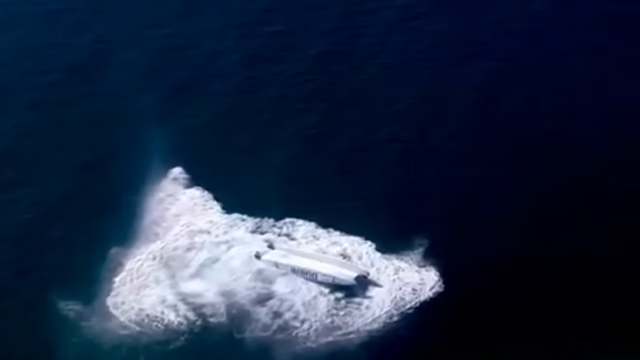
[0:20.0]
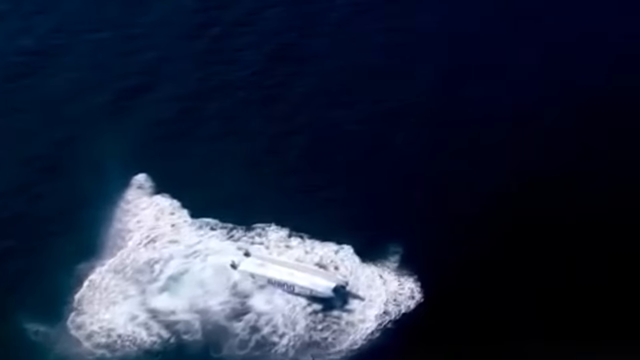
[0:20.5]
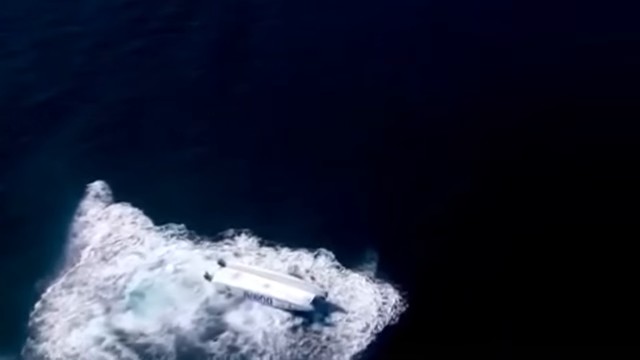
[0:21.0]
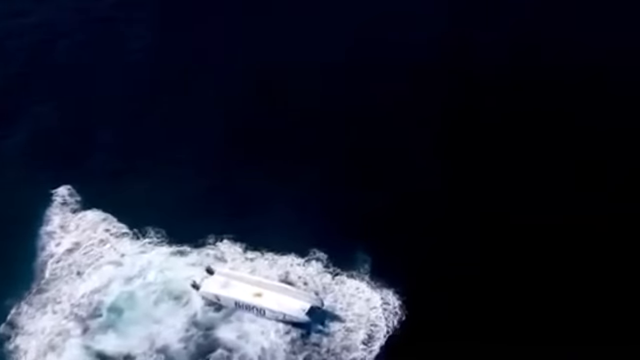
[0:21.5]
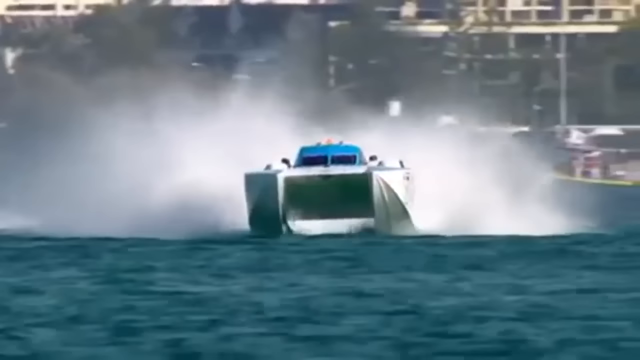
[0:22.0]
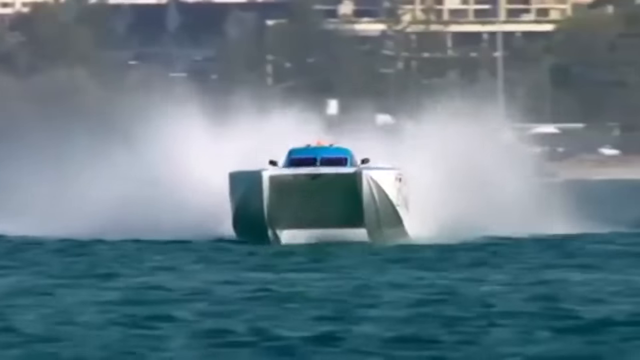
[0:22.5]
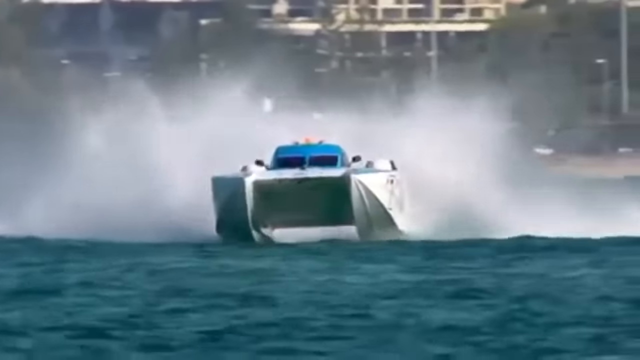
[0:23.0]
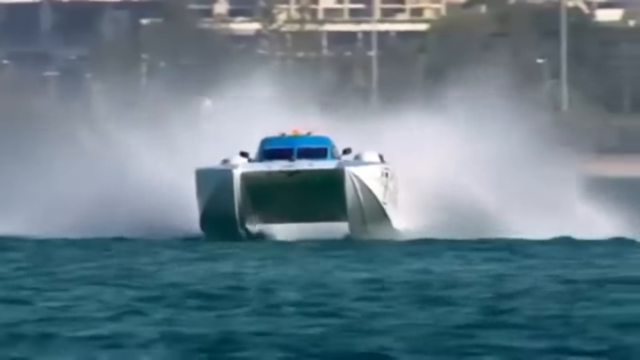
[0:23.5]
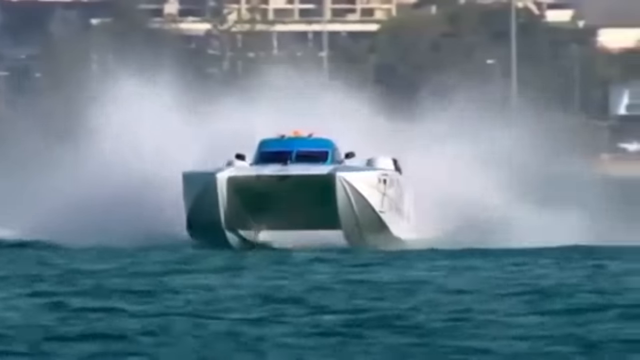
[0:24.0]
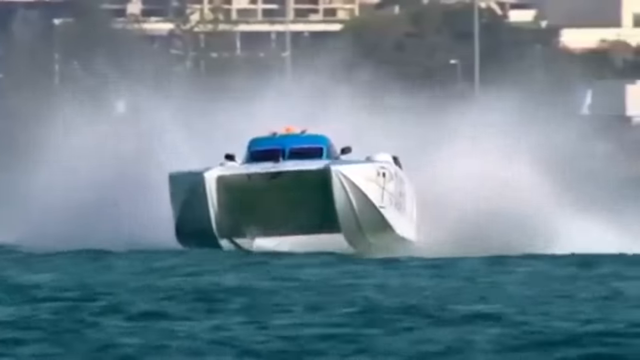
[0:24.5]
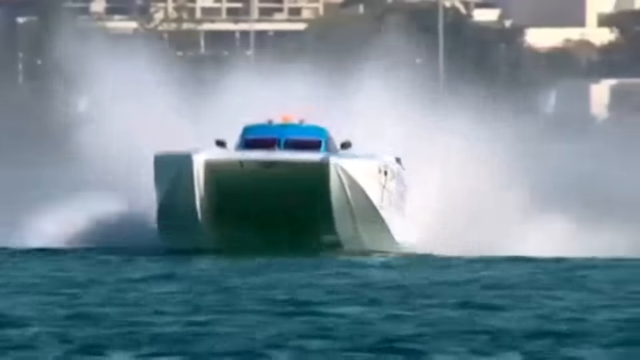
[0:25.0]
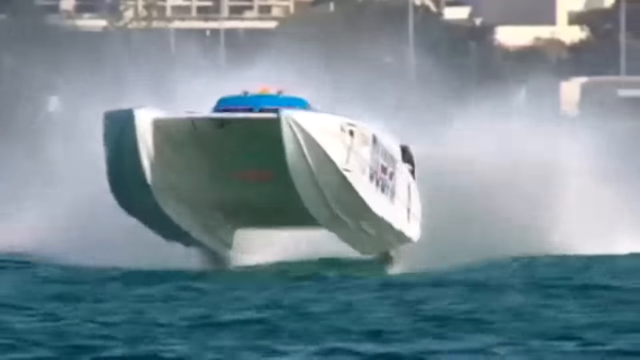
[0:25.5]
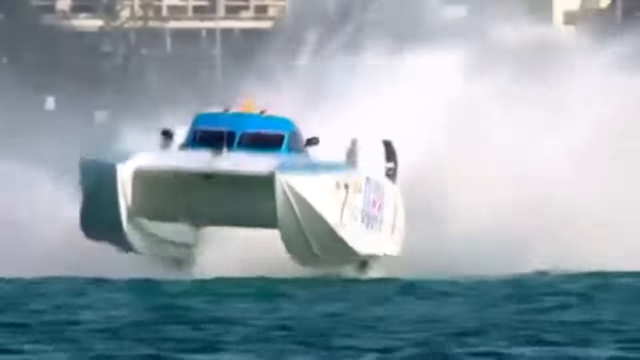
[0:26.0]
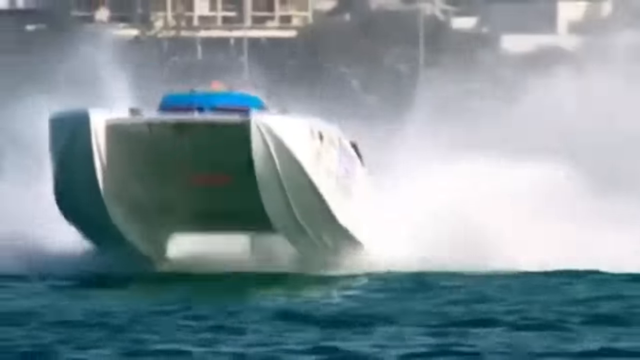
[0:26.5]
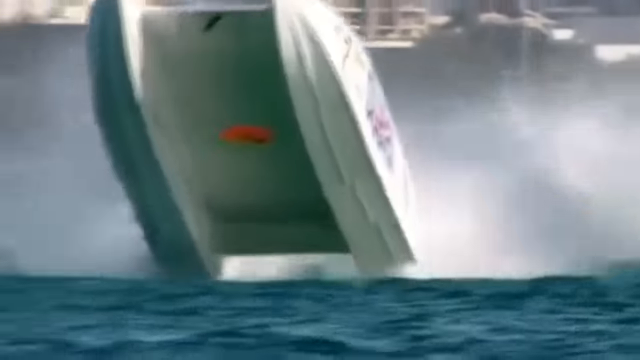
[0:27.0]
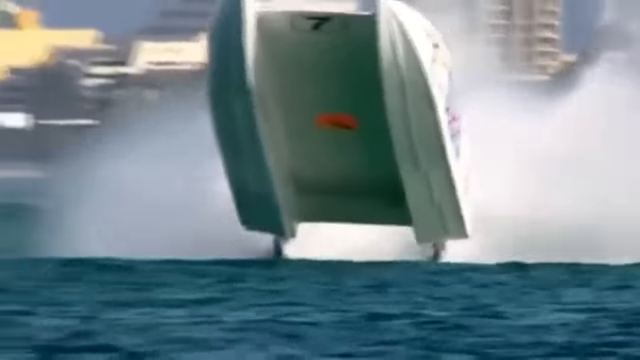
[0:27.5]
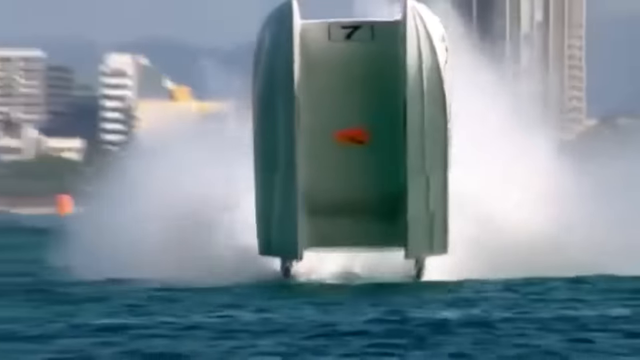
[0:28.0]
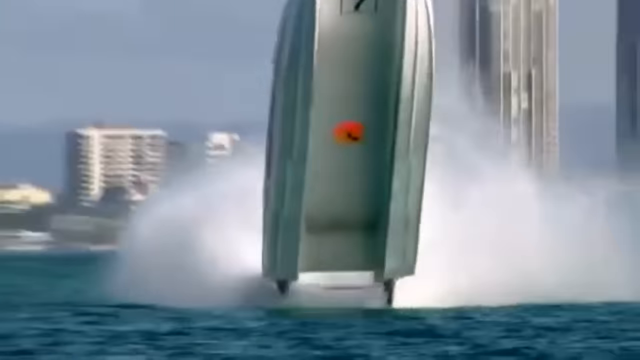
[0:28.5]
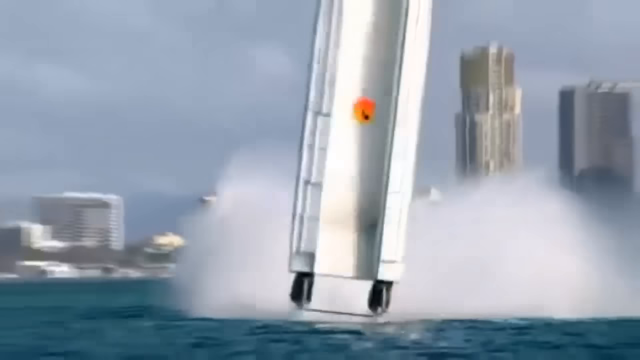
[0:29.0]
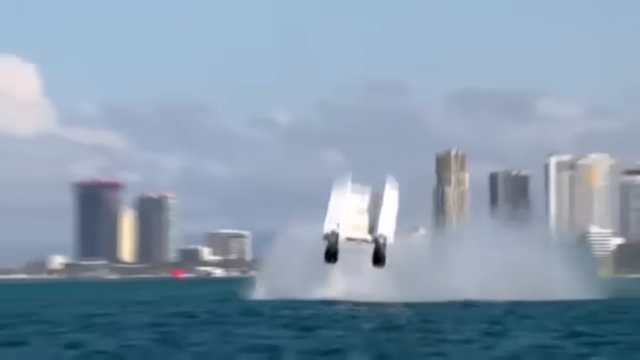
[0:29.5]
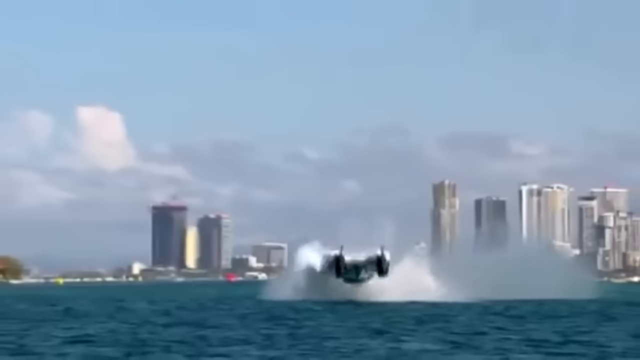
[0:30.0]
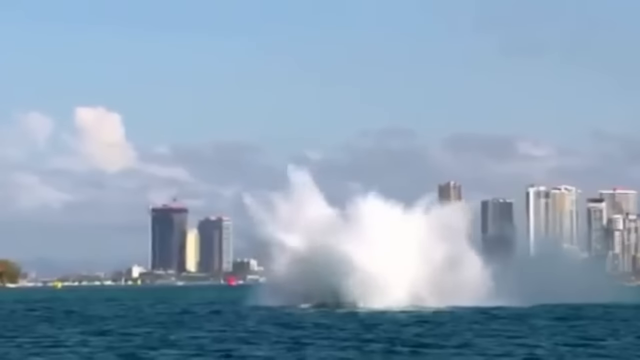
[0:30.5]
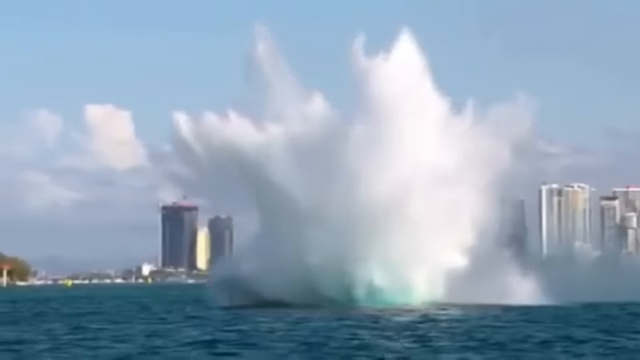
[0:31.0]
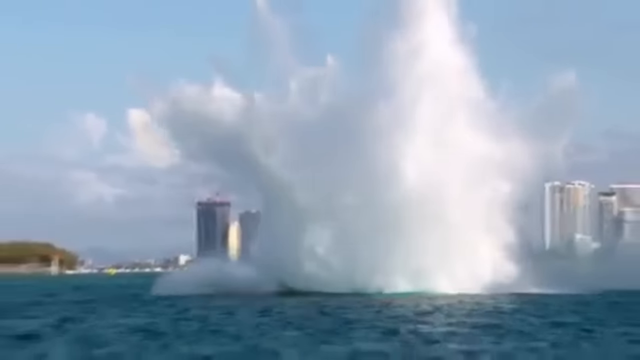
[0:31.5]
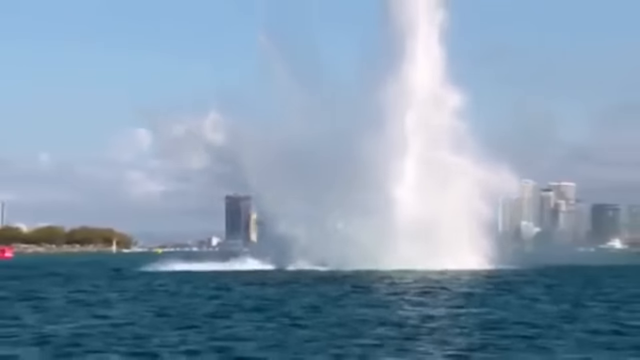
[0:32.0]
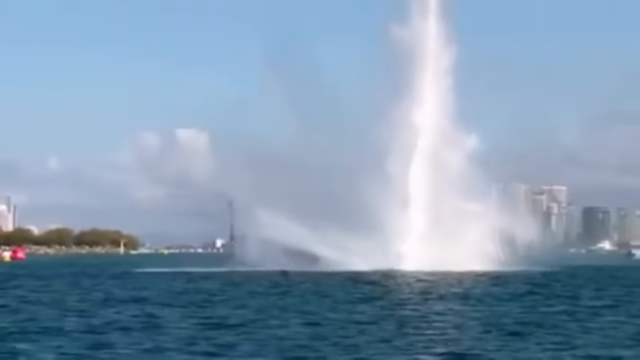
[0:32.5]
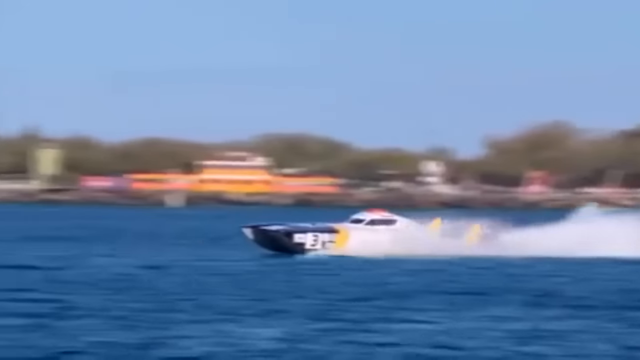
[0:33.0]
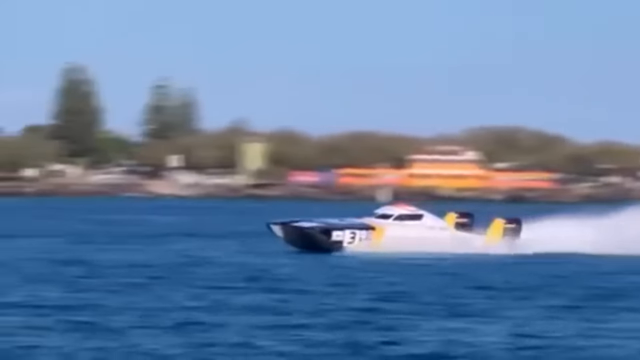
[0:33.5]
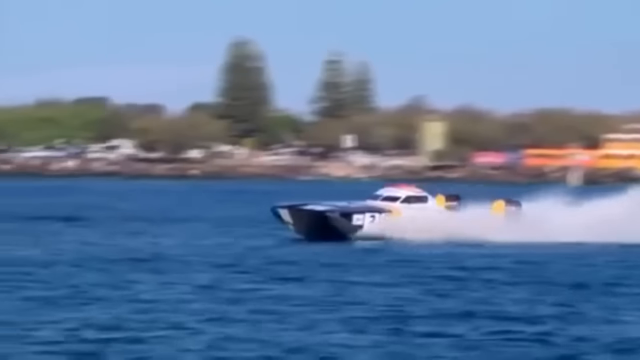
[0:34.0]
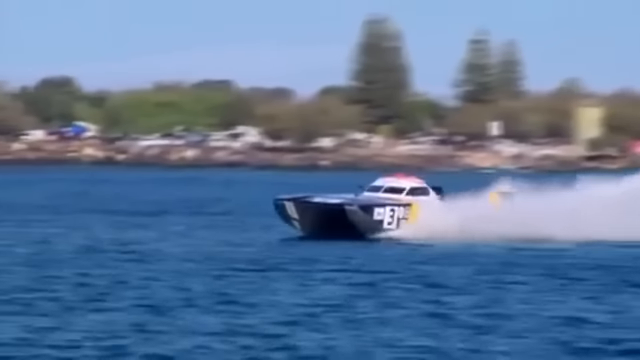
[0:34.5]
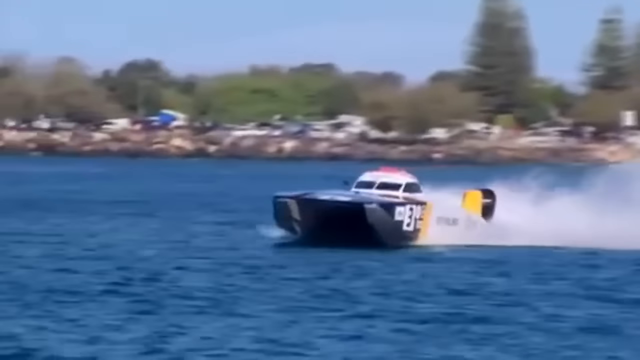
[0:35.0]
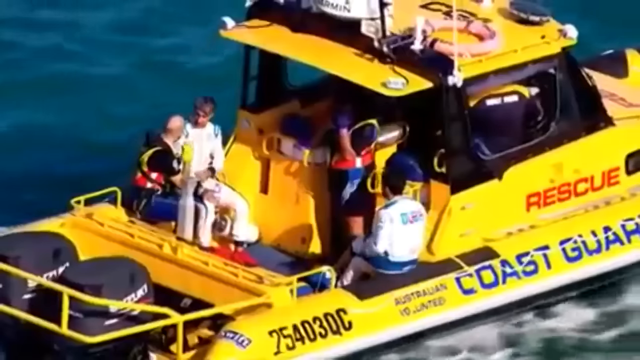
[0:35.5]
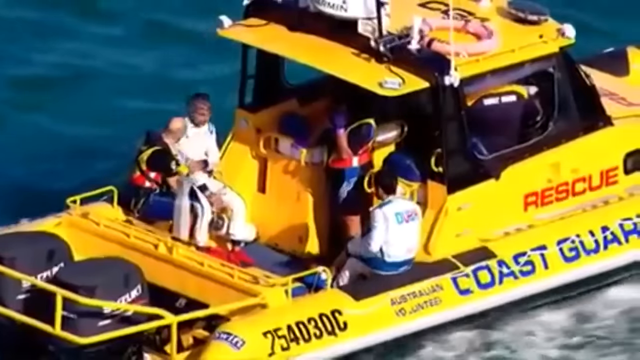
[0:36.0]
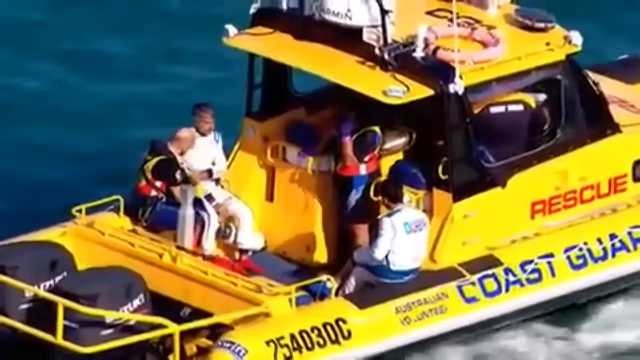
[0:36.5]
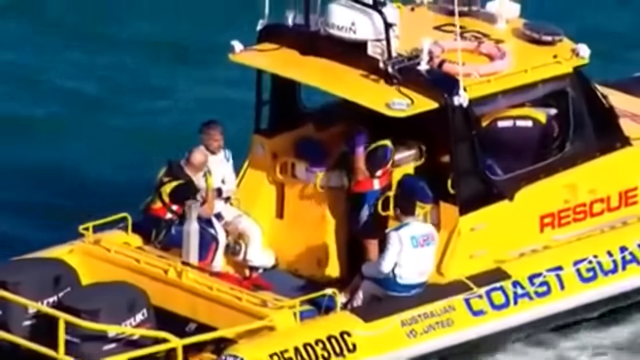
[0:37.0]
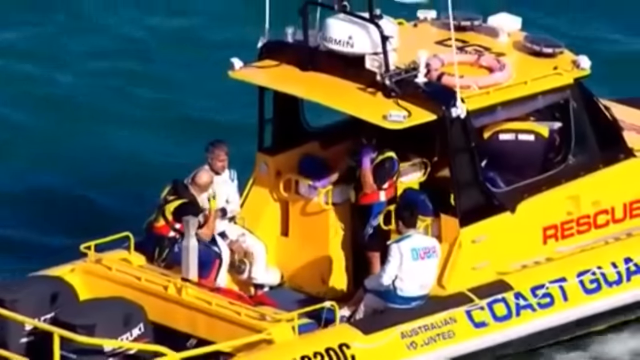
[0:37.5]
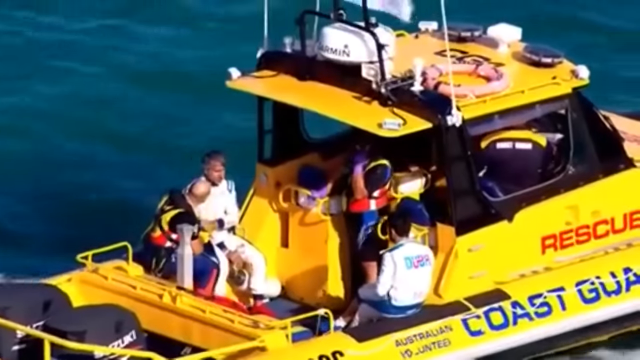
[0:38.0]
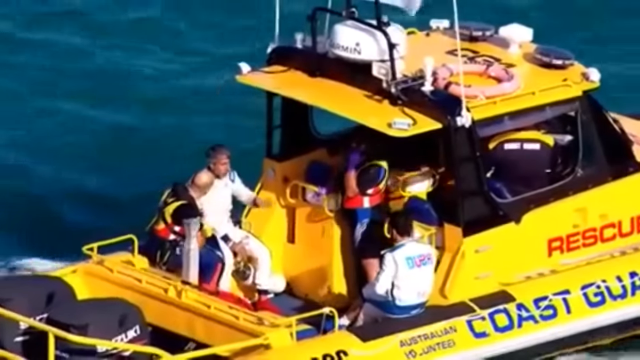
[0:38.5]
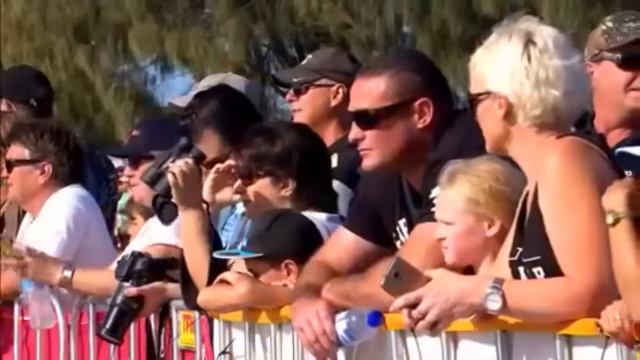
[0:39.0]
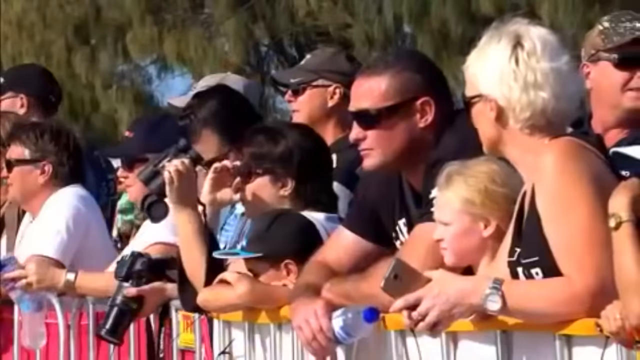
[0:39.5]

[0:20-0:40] An overhead view from a helicopter shows an upside-down boat sitting amid white, churned water. The camera quickly switches to a head-on view of the other boat, which is still moving extraordinarily quickly across the water, turning slightly. The boat skips, catching little bits of air off the lake's surface, before it seems to hit a slightly larger wave that sends it off-center. It takes one more bounce before its nose comes out of the water and starts to gain lift. The nose does not touch the water again as the air picks the boat up viciously. The underside of the boat is visible: it is all white with an orange circle directly in the middle of the hull, and two engines come off the back. The boat again slams down on its nose, then its tail, then comes to rest, and a rescue boat is shown.